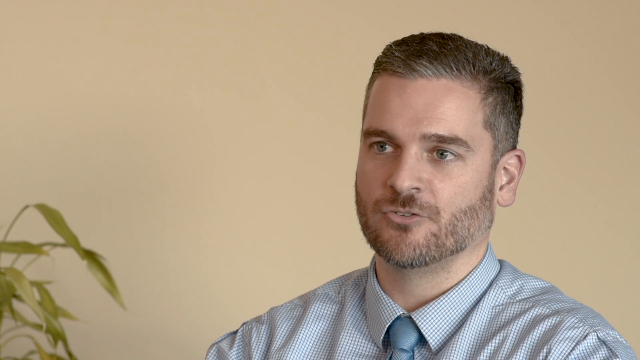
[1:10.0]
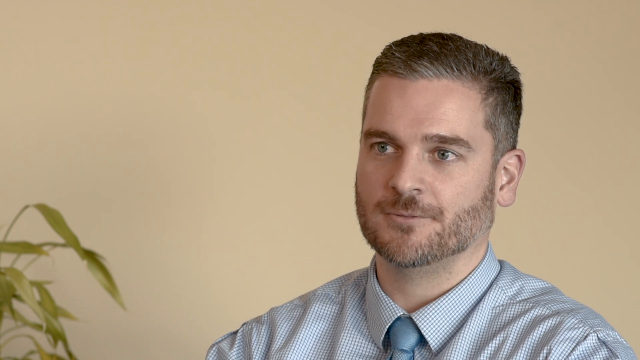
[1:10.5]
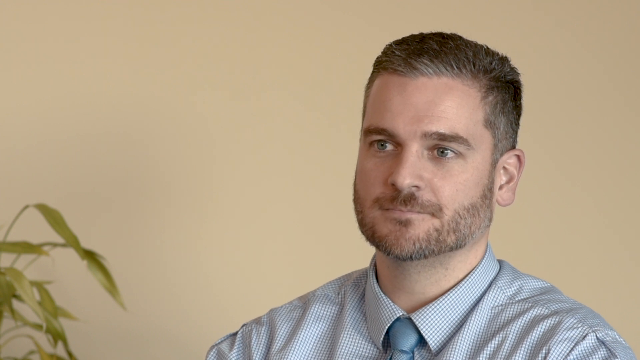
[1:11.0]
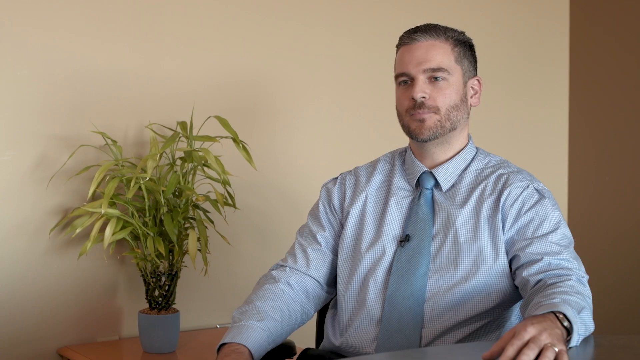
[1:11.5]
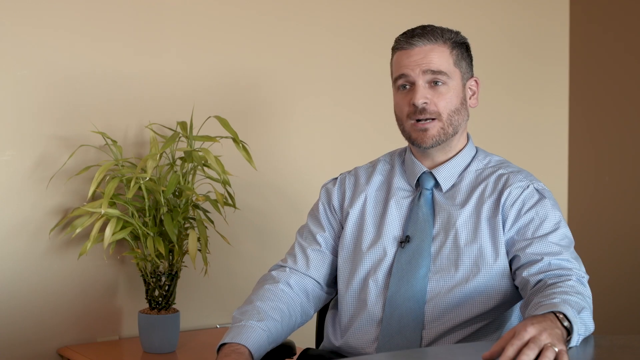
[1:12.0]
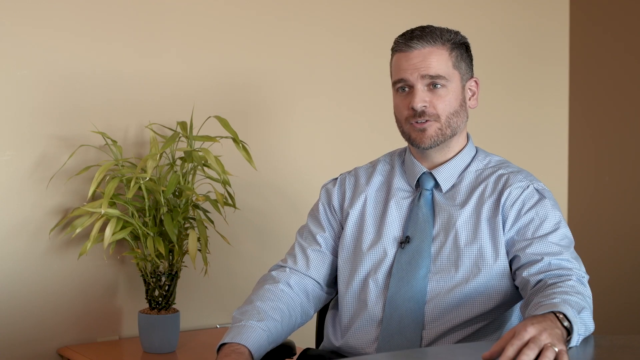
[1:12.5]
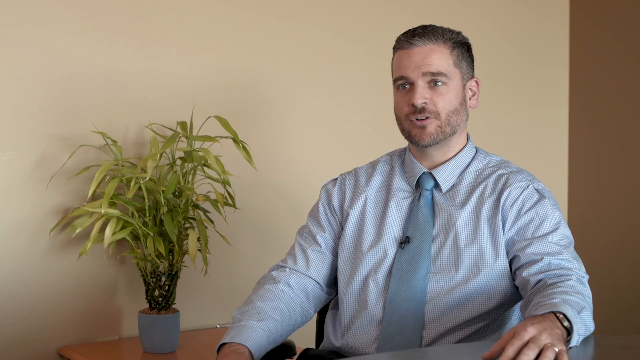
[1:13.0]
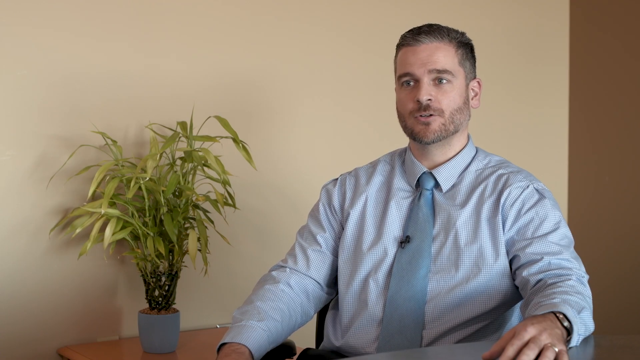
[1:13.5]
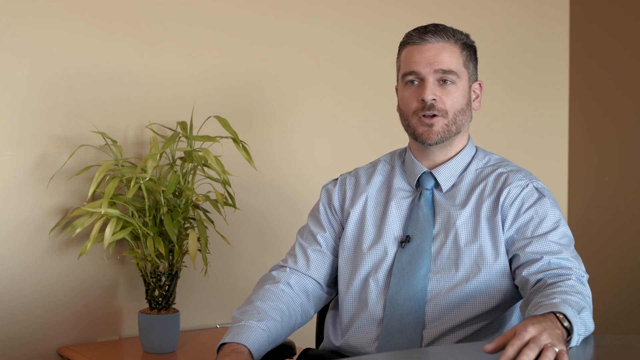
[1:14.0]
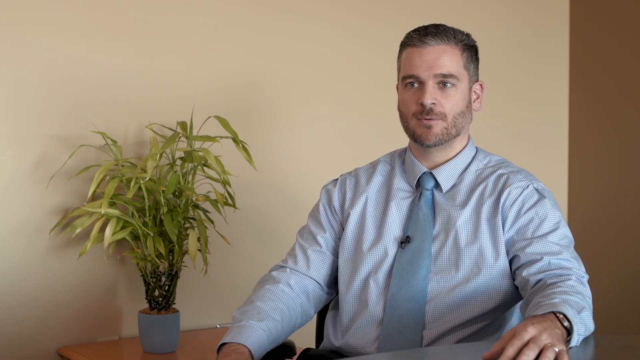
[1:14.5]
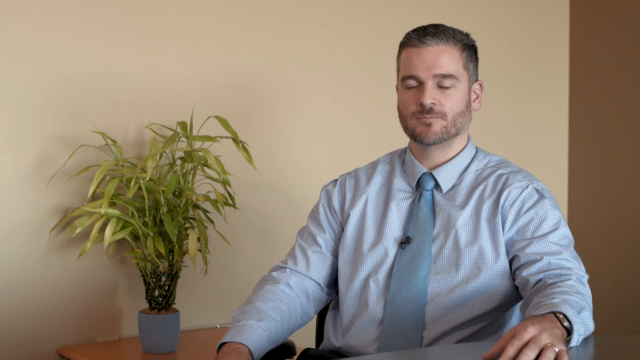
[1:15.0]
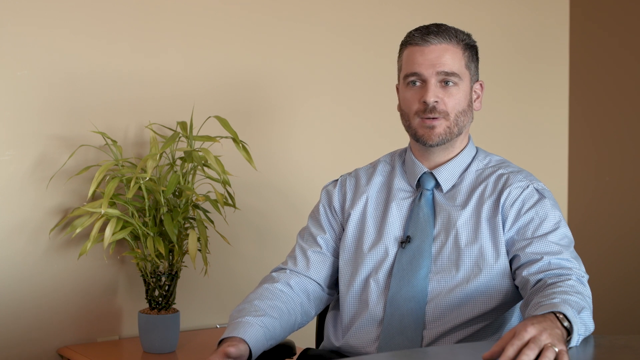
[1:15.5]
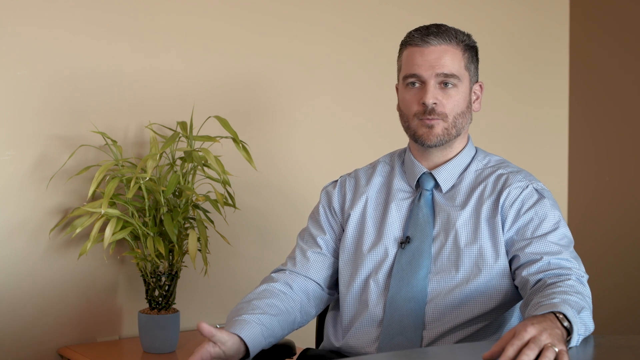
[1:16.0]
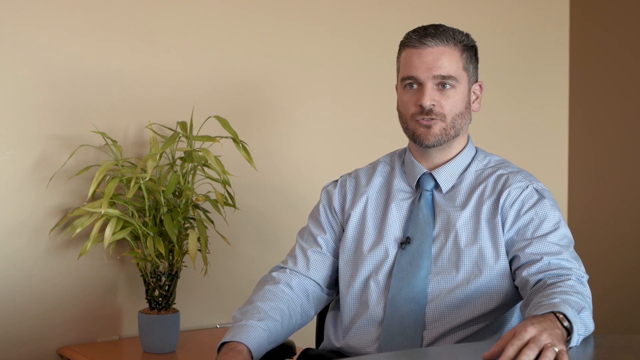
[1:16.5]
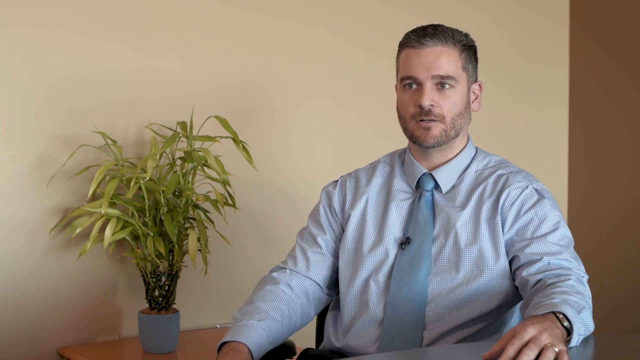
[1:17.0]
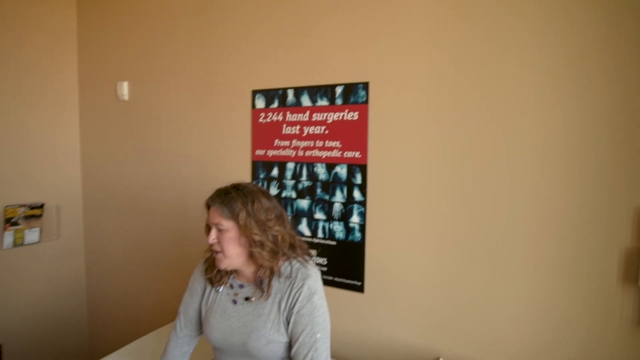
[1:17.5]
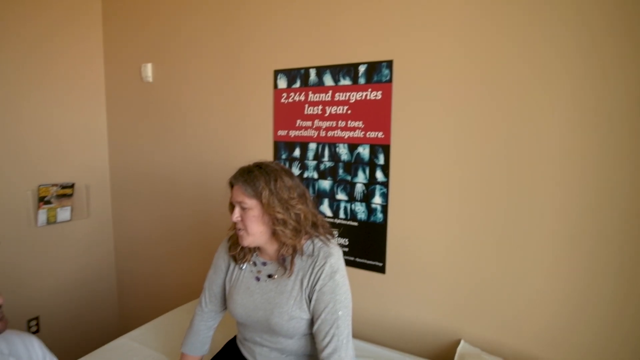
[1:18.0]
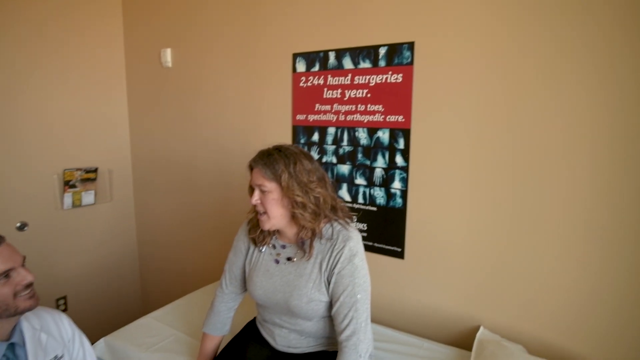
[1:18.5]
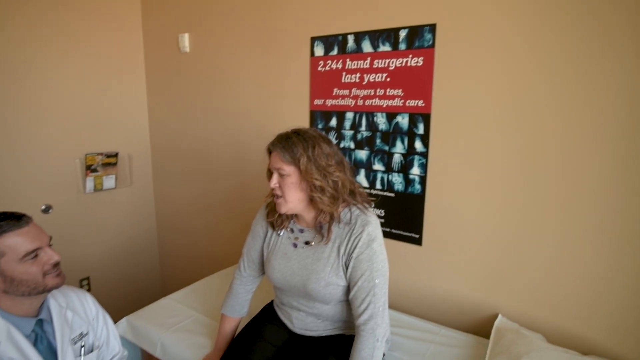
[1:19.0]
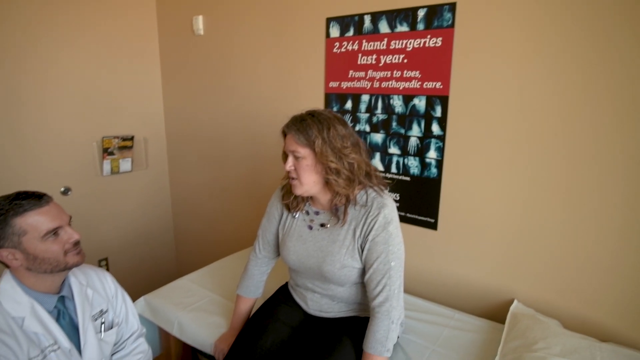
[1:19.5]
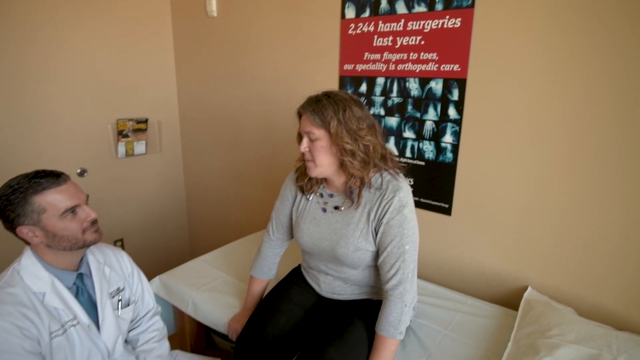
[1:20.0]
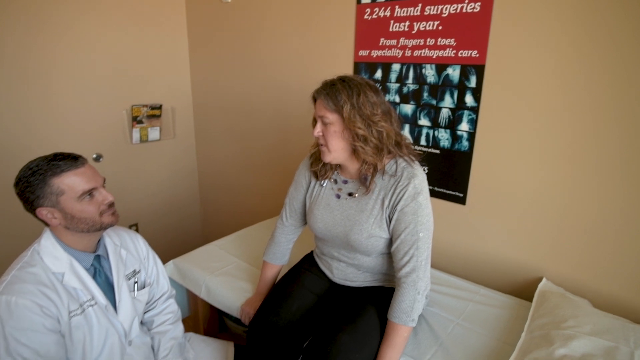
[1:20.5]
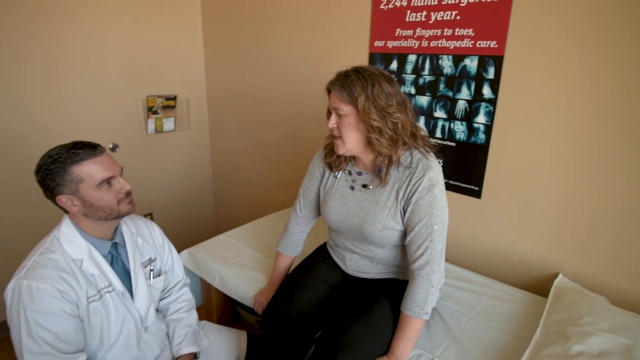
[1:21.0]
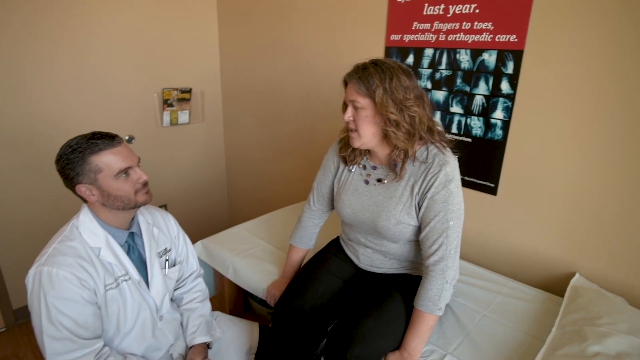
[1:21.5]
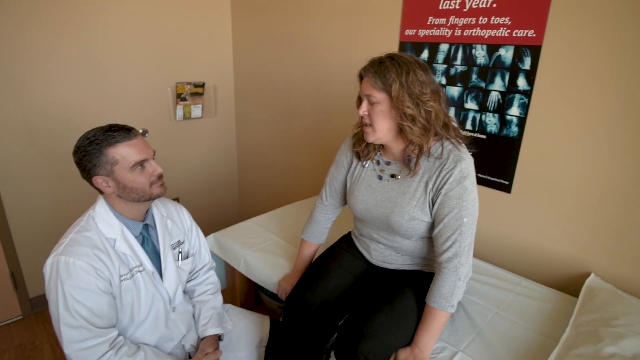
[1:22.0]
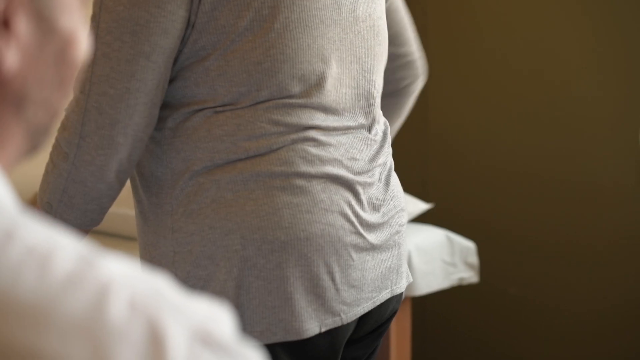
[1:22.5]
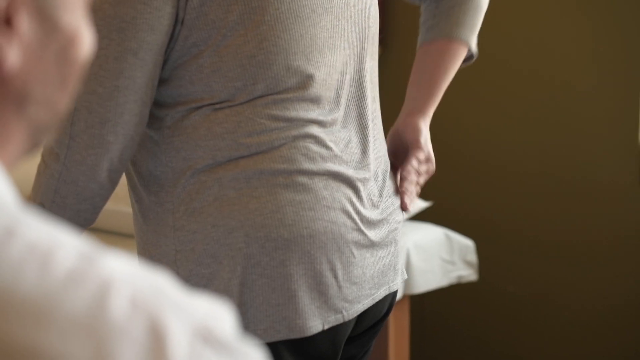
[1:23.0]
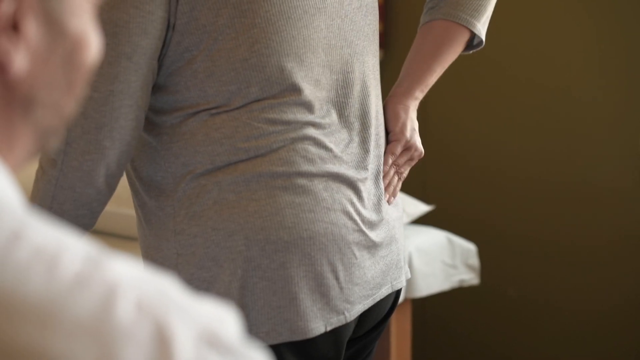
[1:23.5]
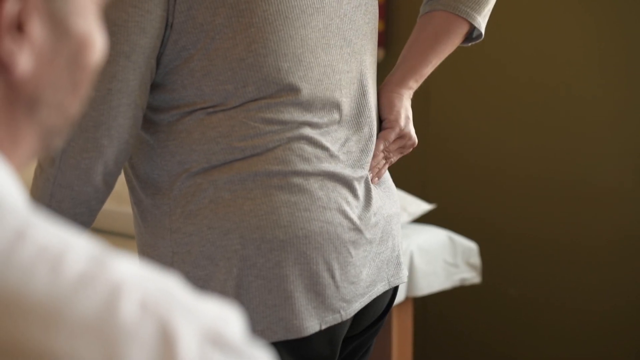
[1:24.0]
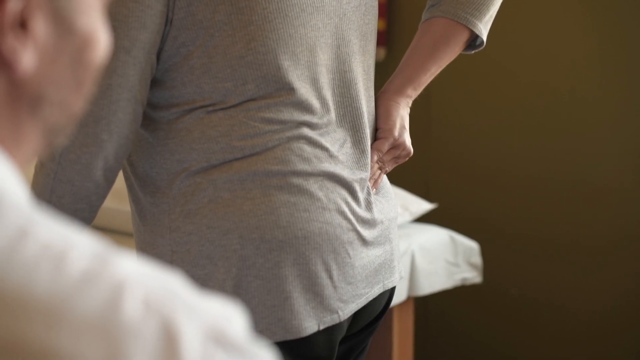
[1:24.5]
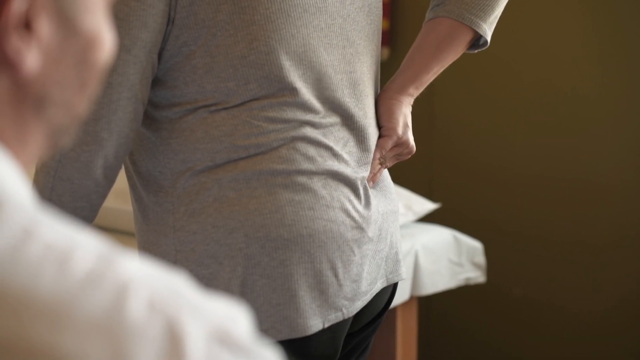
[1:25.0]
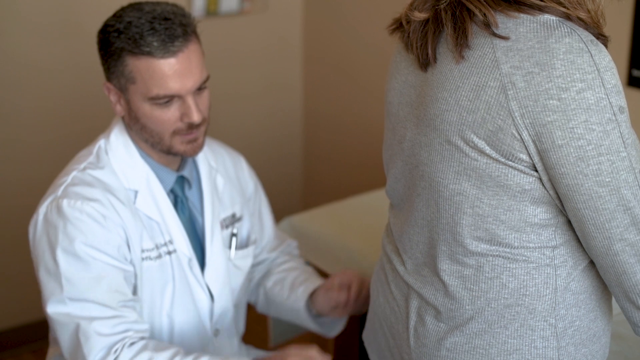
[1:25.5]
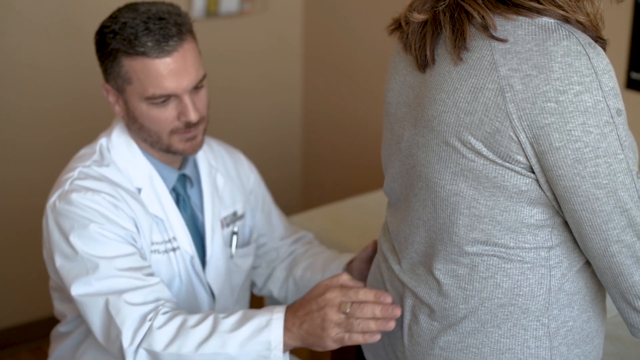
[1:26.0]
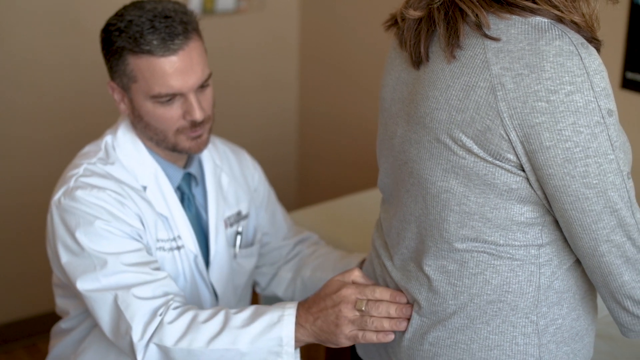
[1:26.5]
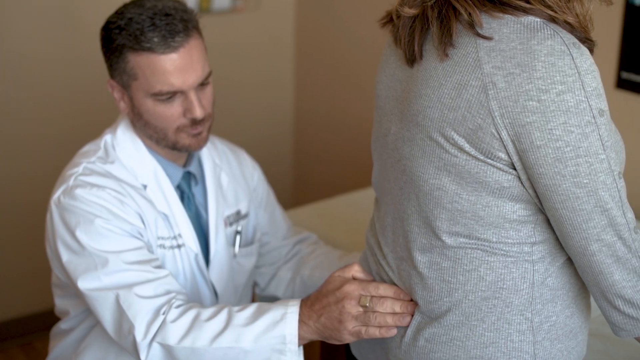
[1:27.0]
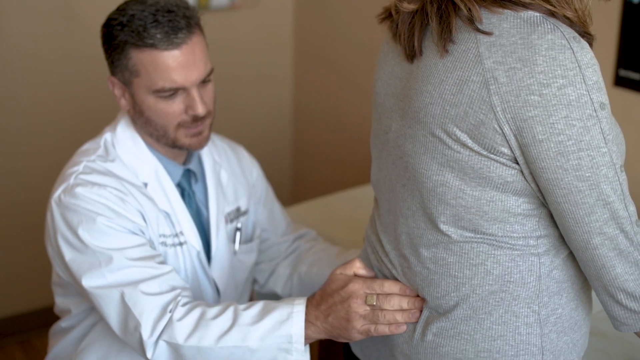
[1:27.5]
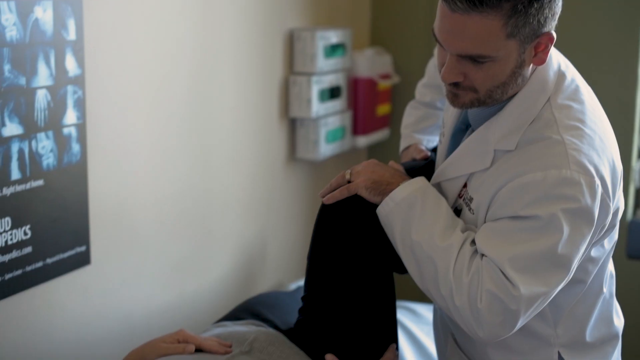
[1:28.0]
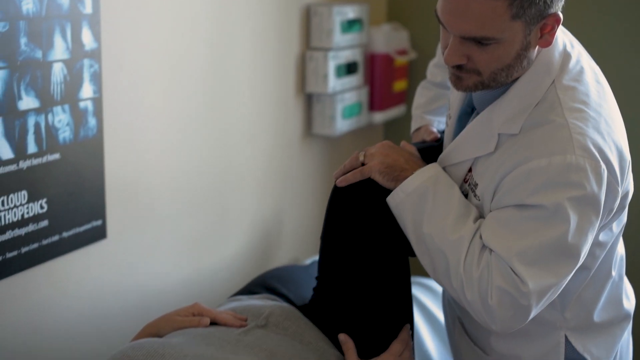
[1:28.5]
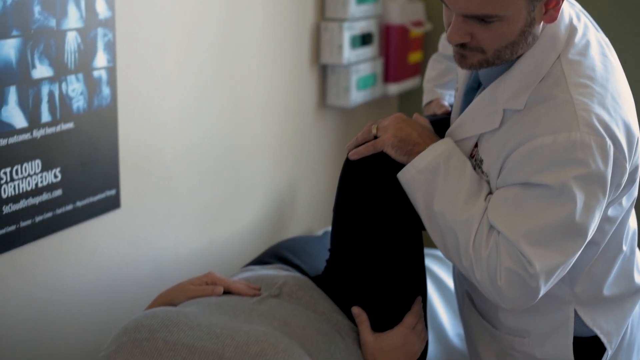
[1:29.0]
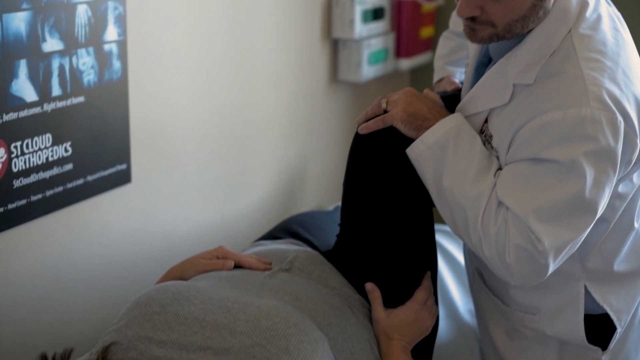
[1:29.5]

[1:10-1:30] The doctor is sitting down, apparently facing whoever is interviewing him, and looking toward the right. He wears a wedding ring and what looks like a watch on the same hand, and has a small mic clipped to his tie. He then talks with the same patient as before, who wears black pants; she appears to touch where her pain is, and the doctor touches it as well. He then has her lie down with that same leg bent almost at a 90-degree angle, as if she were sitting in a chair, and starts pushing it back.